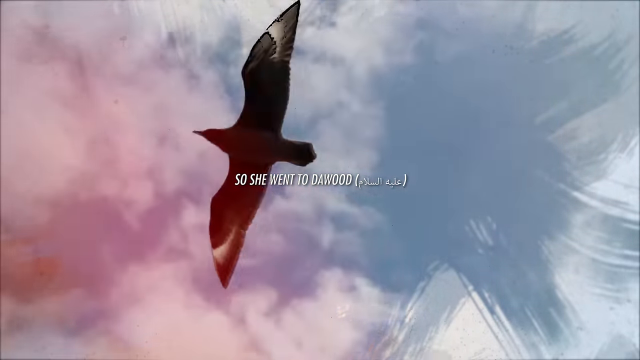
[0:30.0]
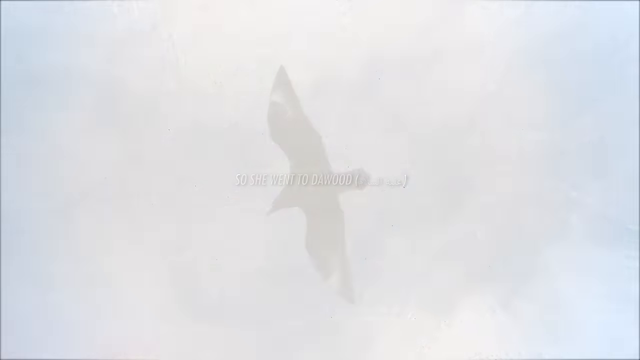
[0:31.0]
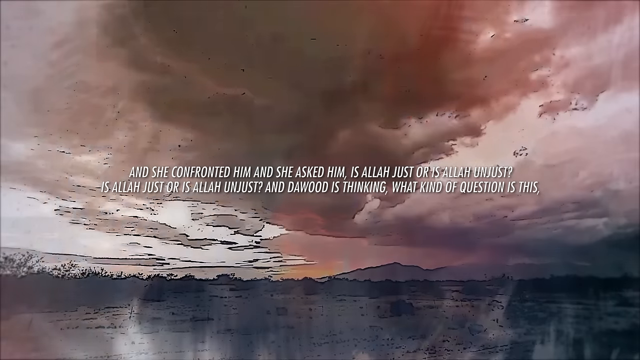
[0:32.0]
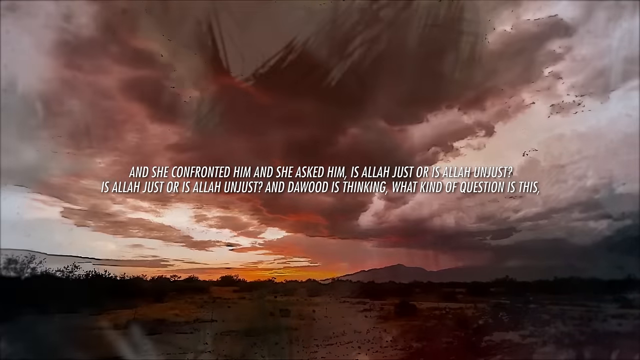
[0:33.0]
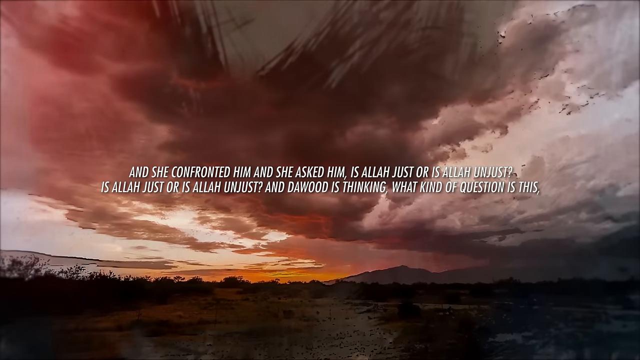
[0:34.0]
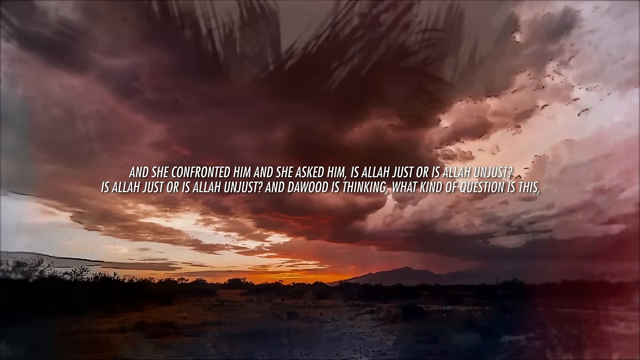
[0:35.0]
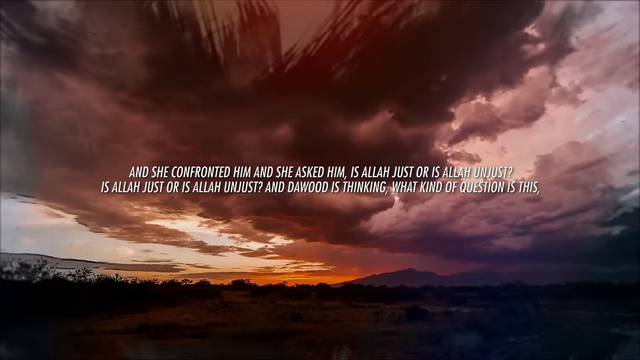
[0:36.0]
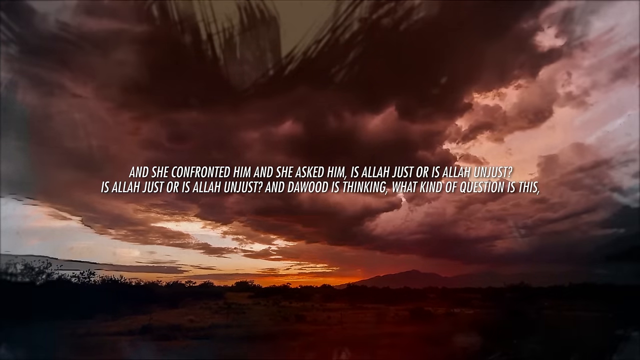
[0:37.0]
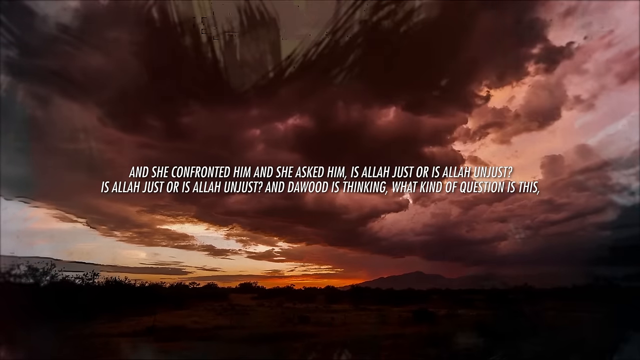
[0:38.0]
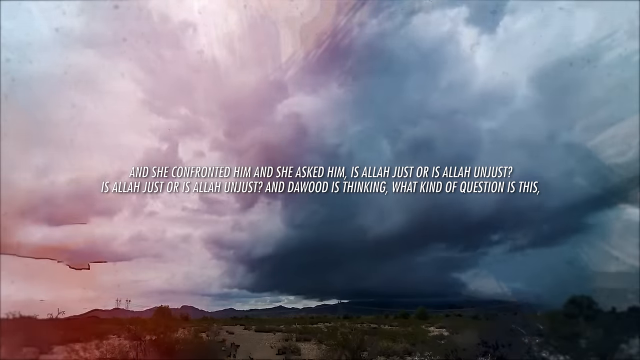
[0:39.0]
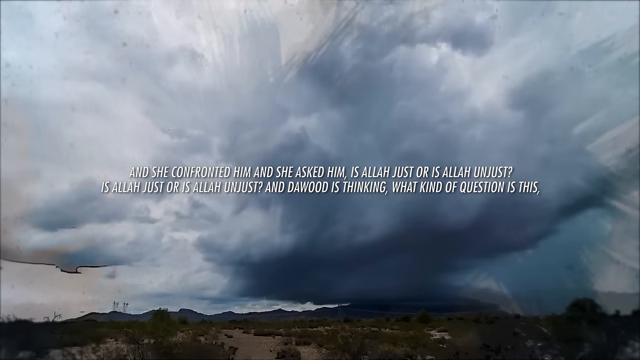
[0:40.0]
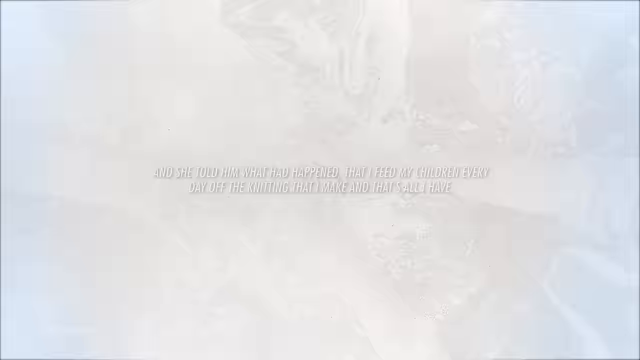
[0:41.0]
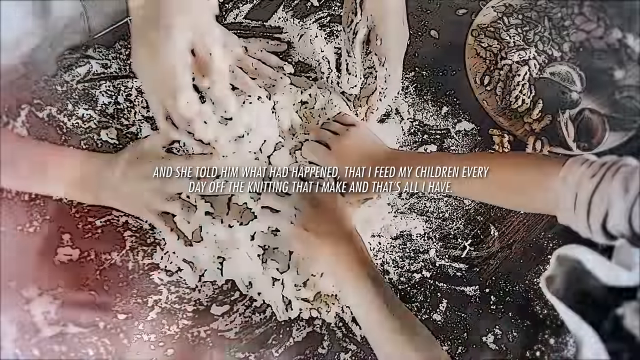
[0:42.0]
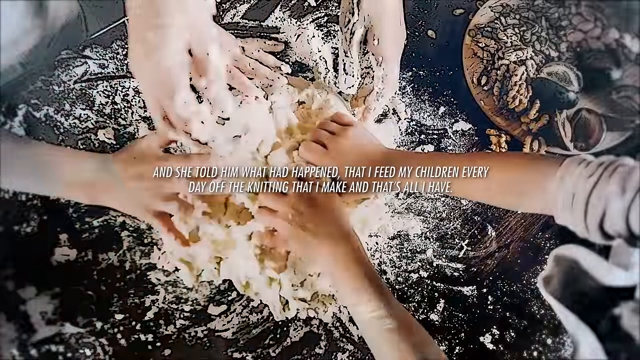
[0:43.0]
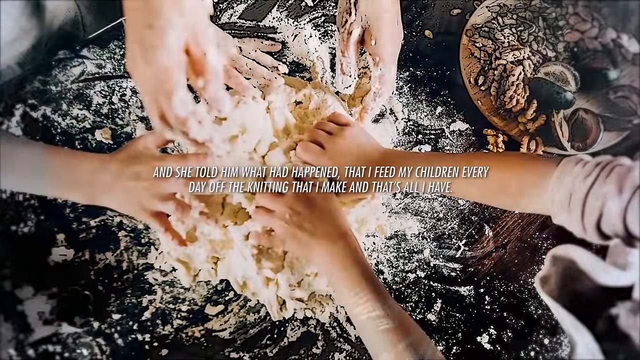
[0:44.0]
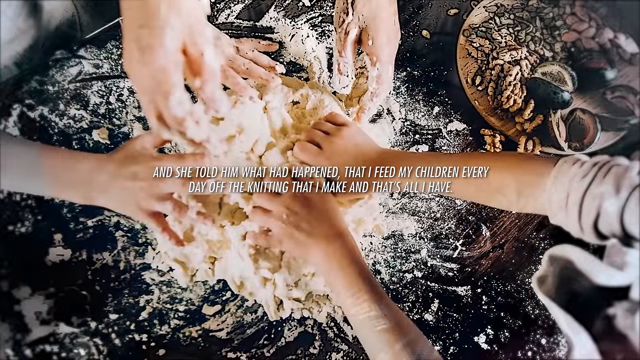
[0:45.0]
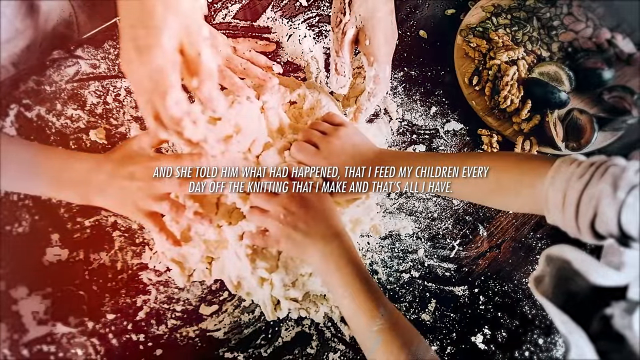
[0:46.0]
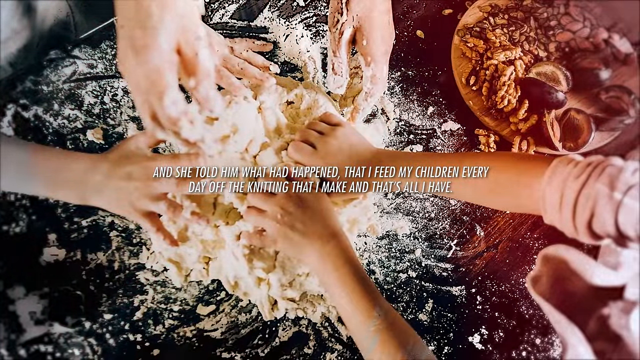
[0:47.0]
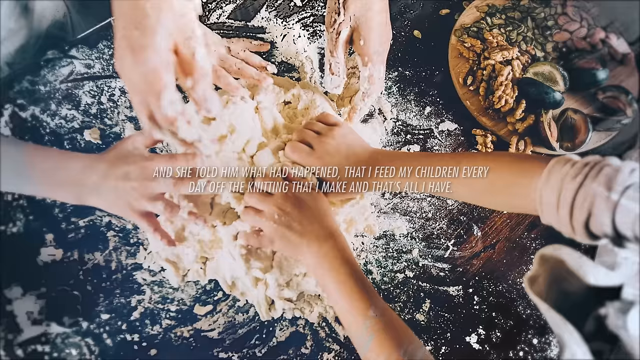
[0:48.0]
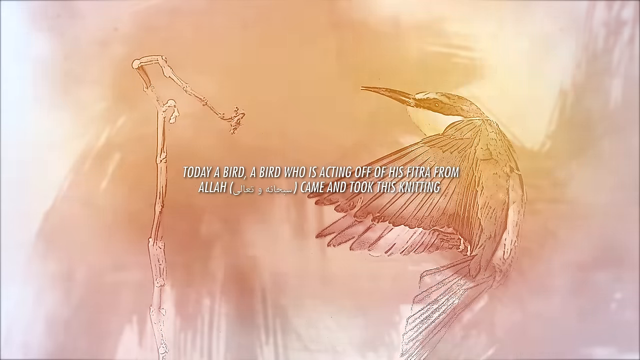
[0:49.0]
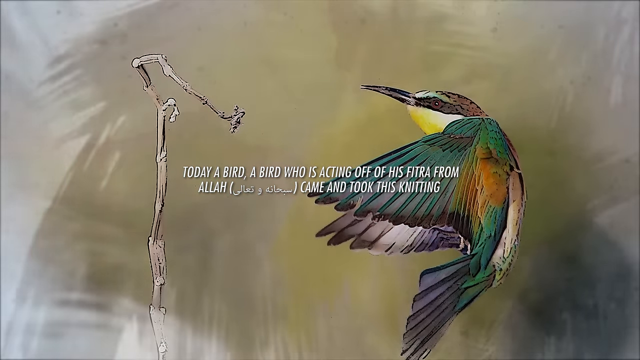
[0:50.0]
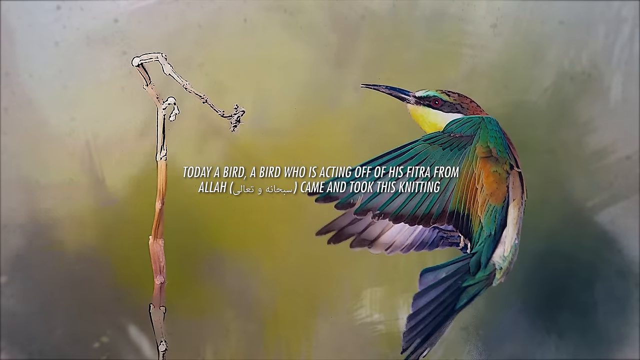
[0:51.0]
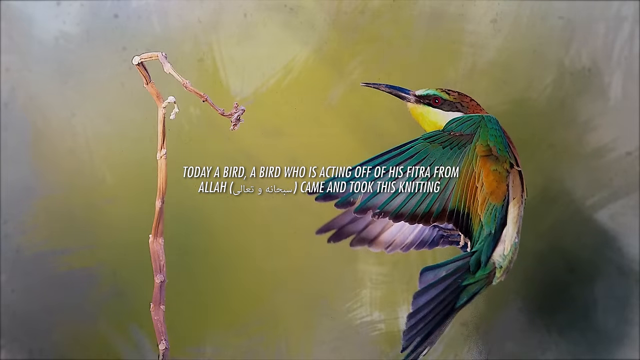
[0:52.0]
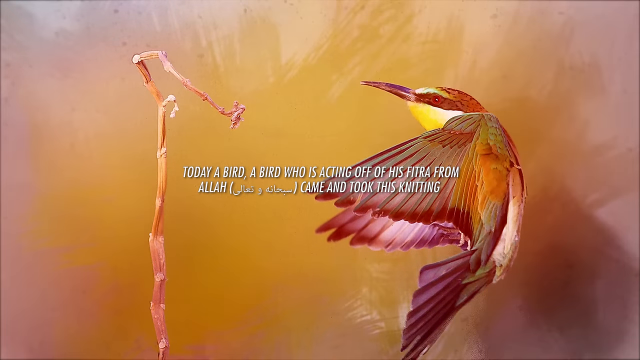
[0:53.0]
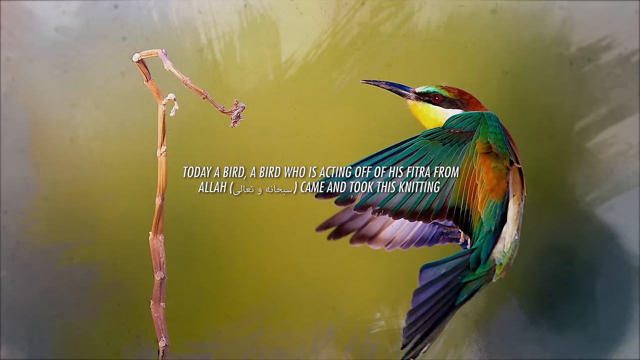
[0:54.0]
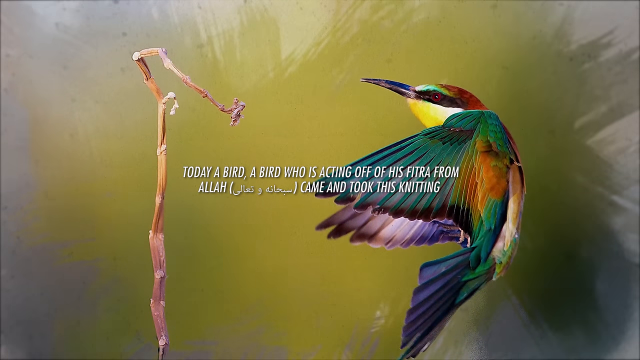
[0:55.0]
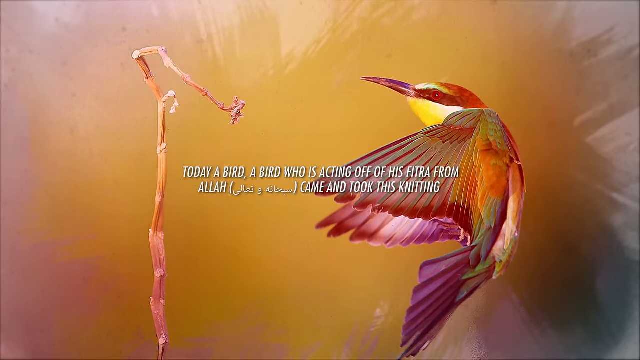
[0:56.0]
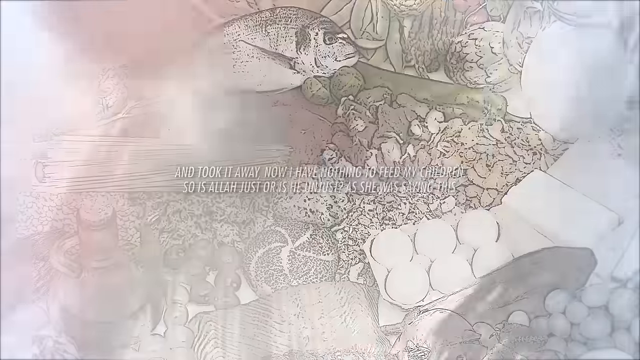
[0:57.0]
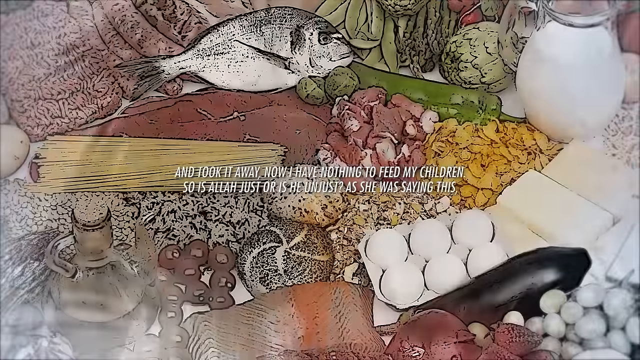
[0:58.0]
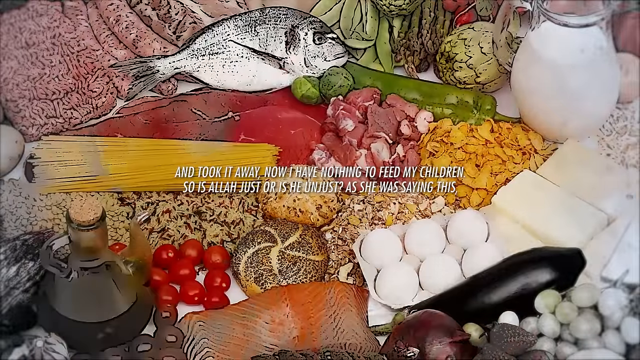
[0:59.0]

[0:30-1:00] The view continues following the bird as more of the story text appears in the center. Behind the bird, the sky is a normal bluish white across the center and right portions of the view, while the bird's head and right wing are heading into a red sky that is also in the background. There appears to be a flash of red, then a fade to white, and the sky and clouds are seen turning red over a body of water and land, with the water on the left and the land on the right. It is a bright sort of period, so only the black outline of the land is visible, without actual details. A cloud moves toward the viewer, becoming more ominously red. The scene switches to blue clouds and then to a couple of people's hands grabbing food while more text appears. When the text mentions a bird again, the image changes to what looks like a hummingbird, or a small bird, facing left, with a little flower and a twig on its left. The bird has green wings with tips turning purple, and the insides are purple as well. Near the back of its wings it is orange, the top of its head is brown, and the very front of its forehead is green. Its eye is red with a black, mask-like stripe around it, its chin is yellow, and its beak is black.